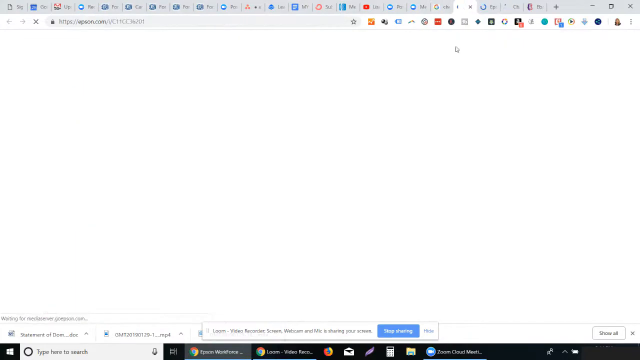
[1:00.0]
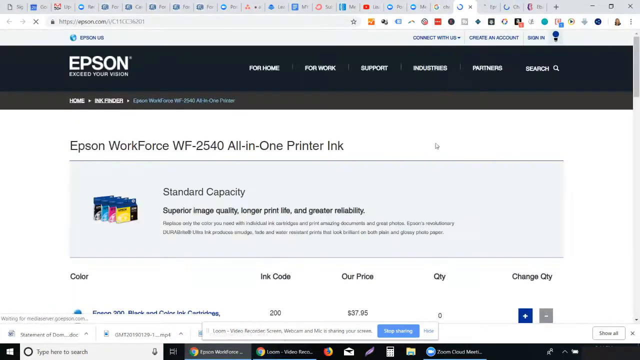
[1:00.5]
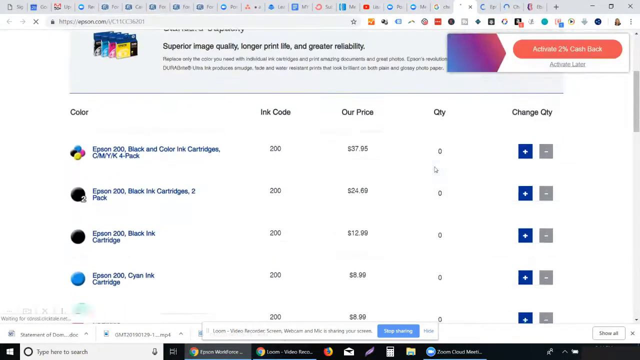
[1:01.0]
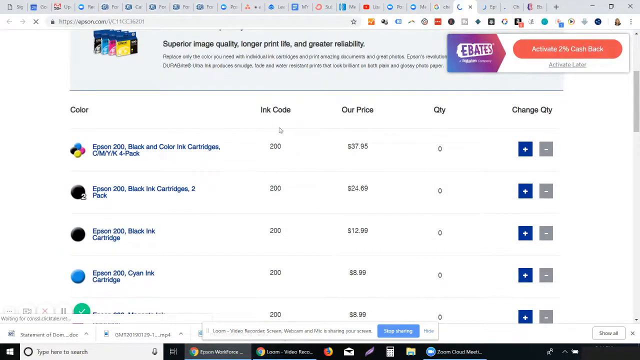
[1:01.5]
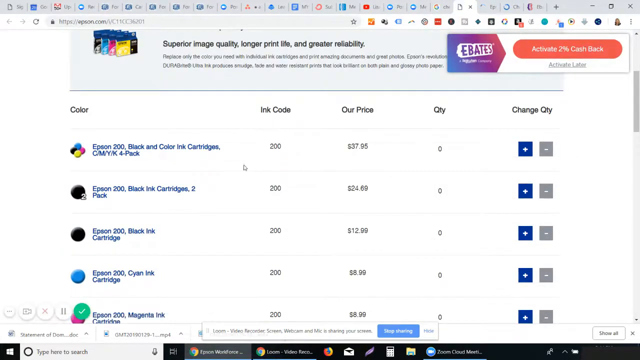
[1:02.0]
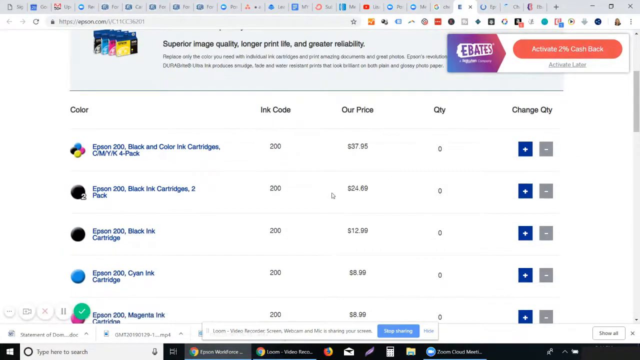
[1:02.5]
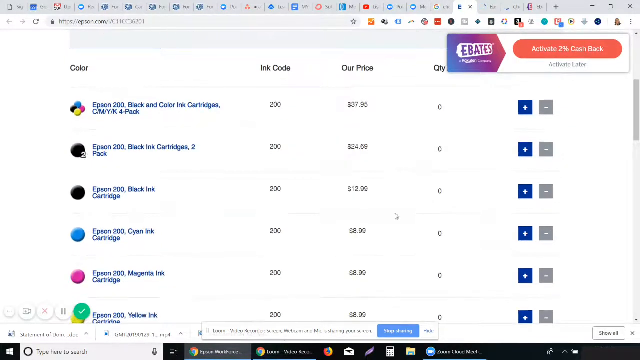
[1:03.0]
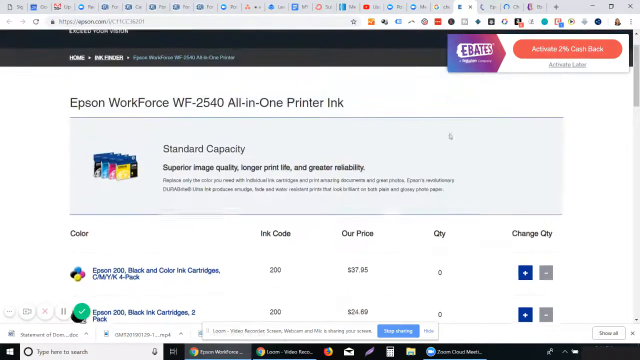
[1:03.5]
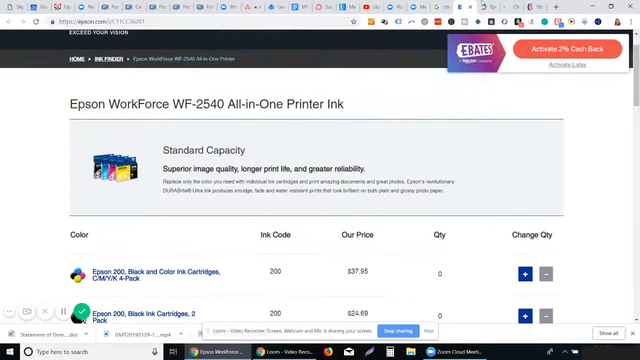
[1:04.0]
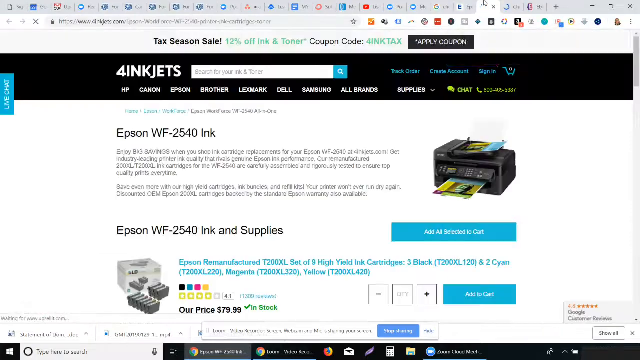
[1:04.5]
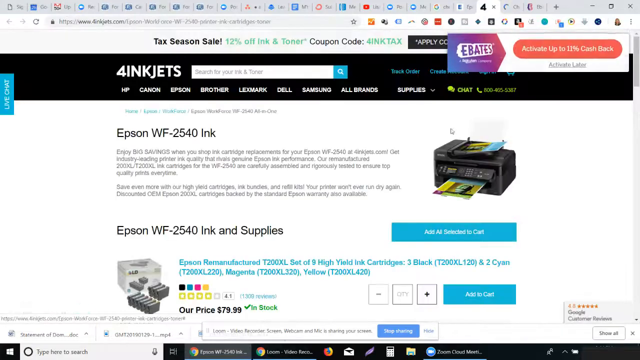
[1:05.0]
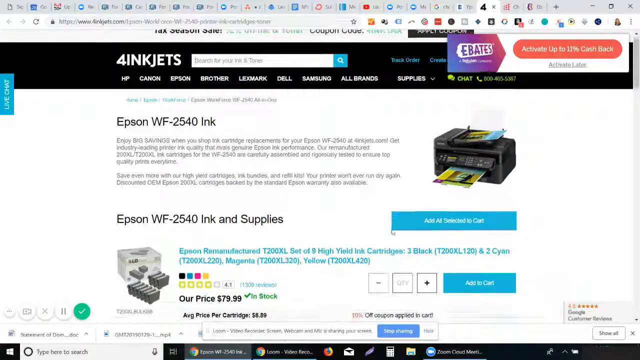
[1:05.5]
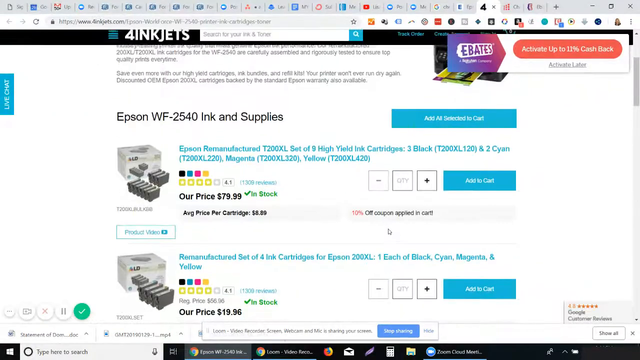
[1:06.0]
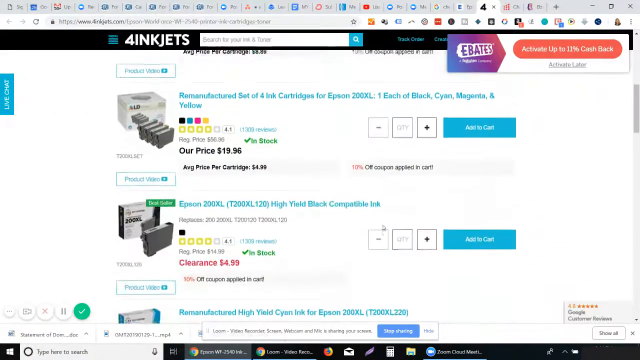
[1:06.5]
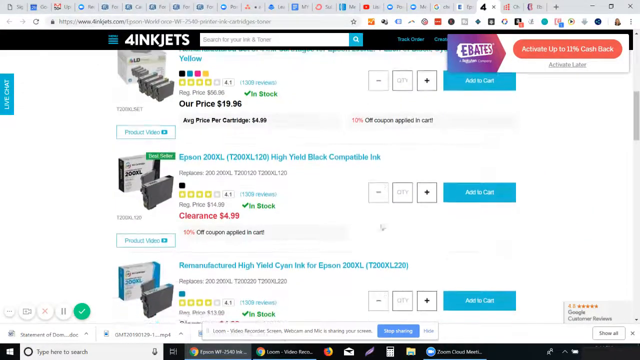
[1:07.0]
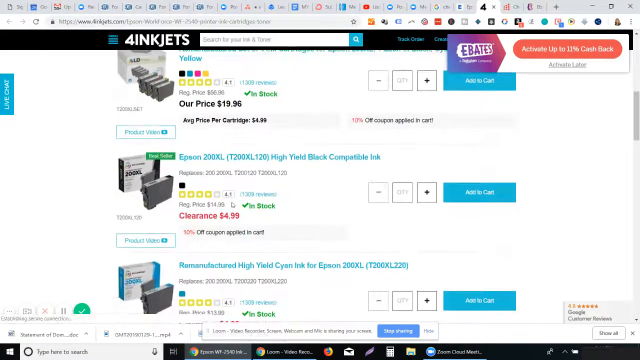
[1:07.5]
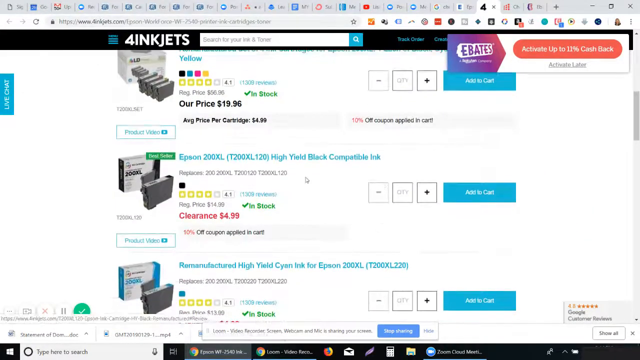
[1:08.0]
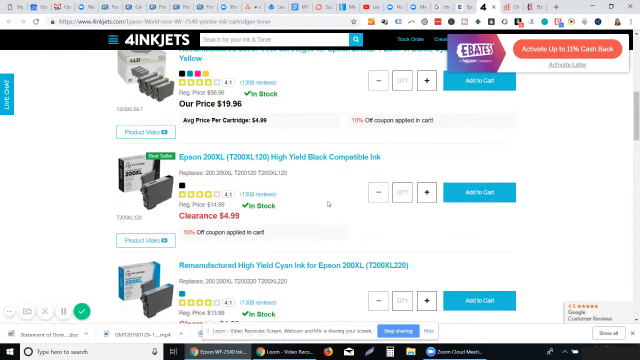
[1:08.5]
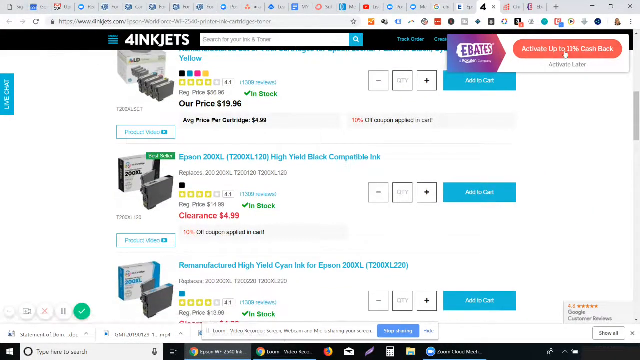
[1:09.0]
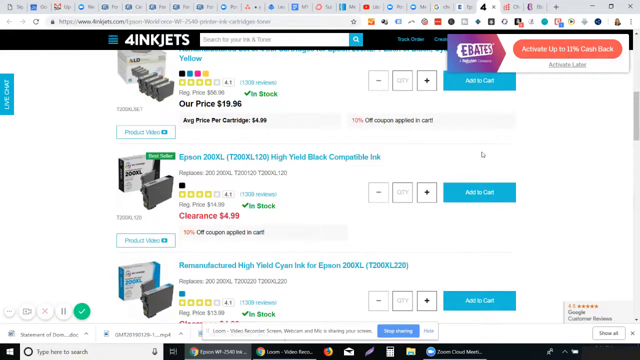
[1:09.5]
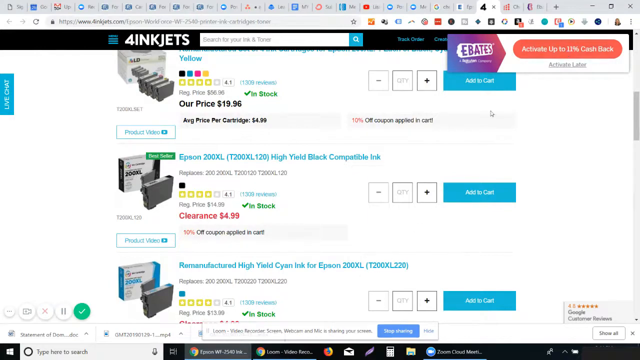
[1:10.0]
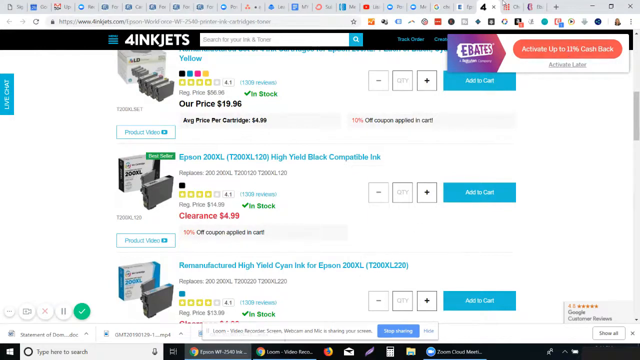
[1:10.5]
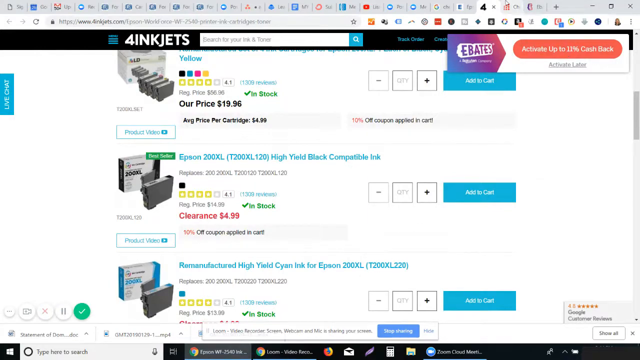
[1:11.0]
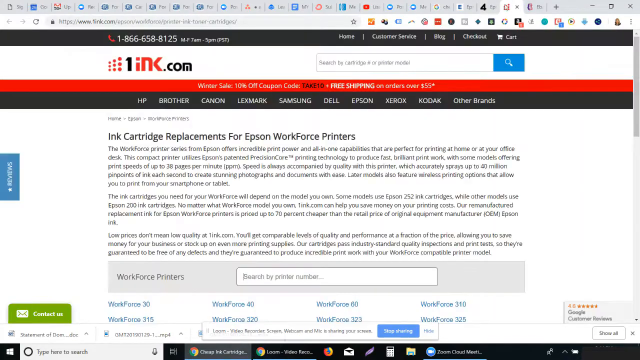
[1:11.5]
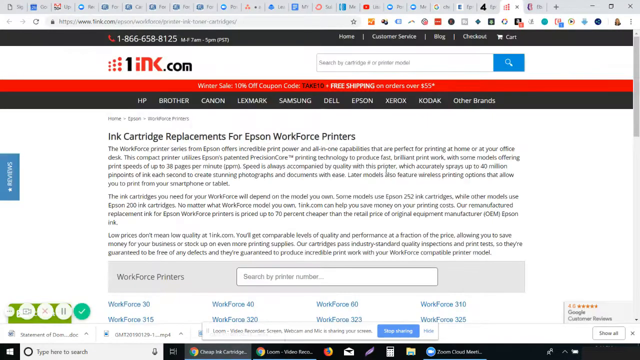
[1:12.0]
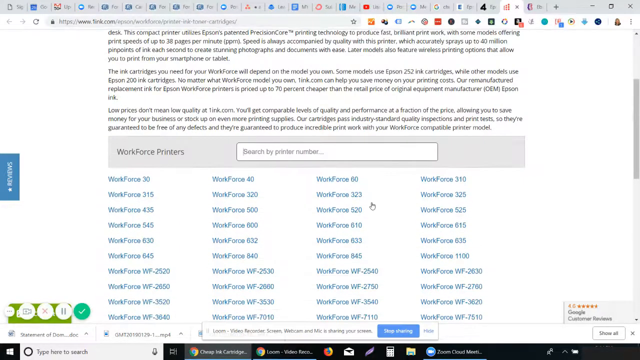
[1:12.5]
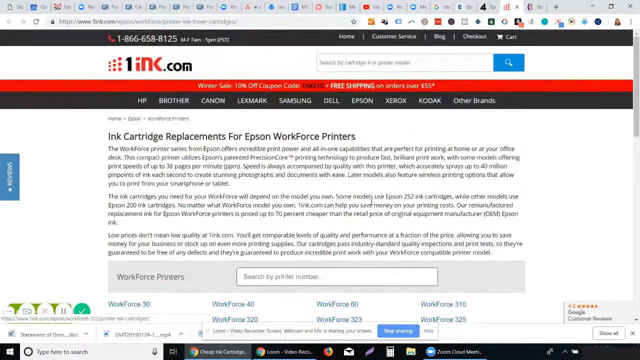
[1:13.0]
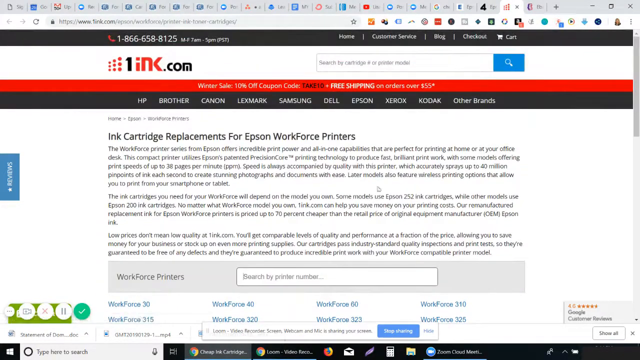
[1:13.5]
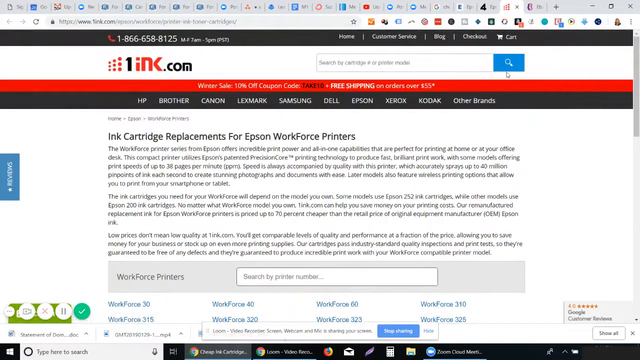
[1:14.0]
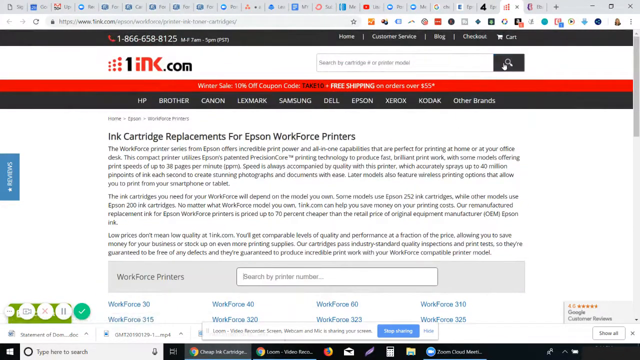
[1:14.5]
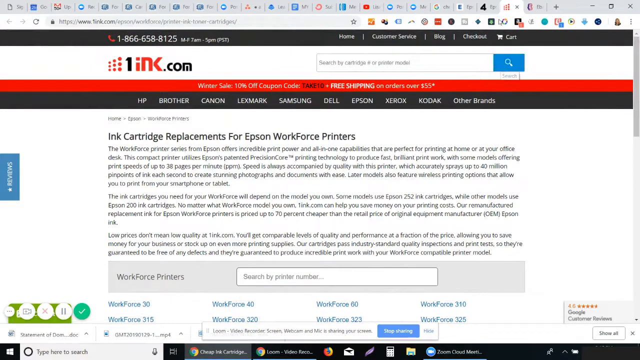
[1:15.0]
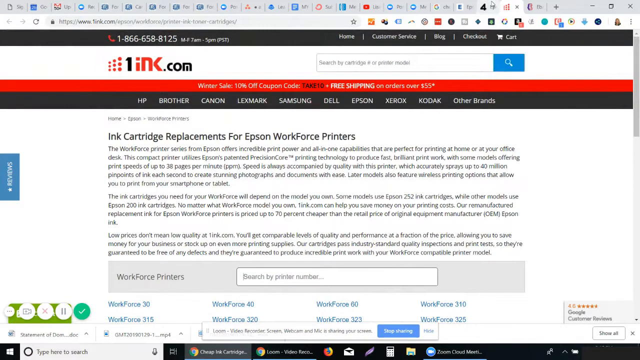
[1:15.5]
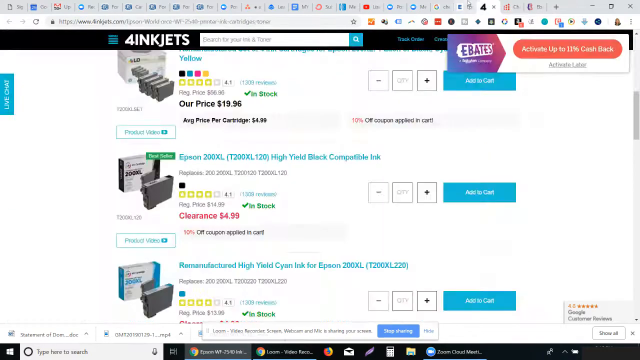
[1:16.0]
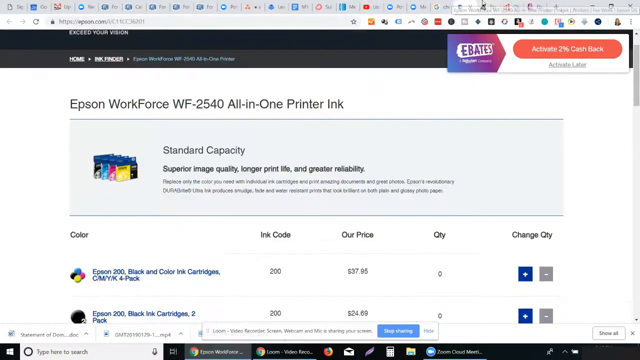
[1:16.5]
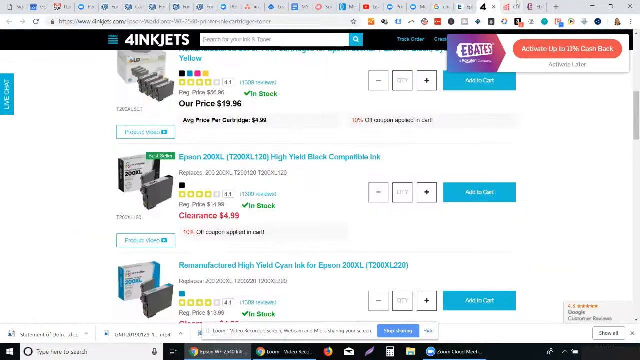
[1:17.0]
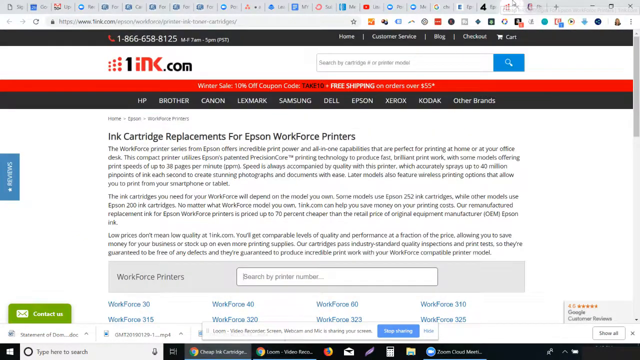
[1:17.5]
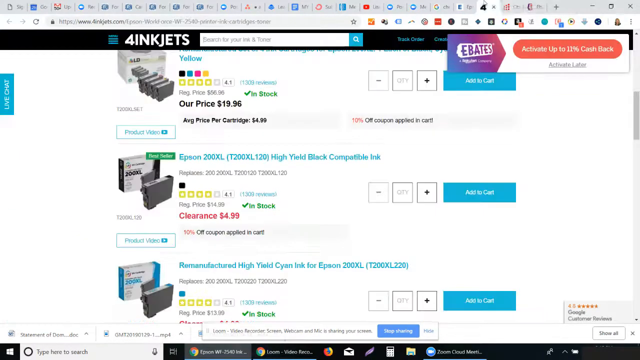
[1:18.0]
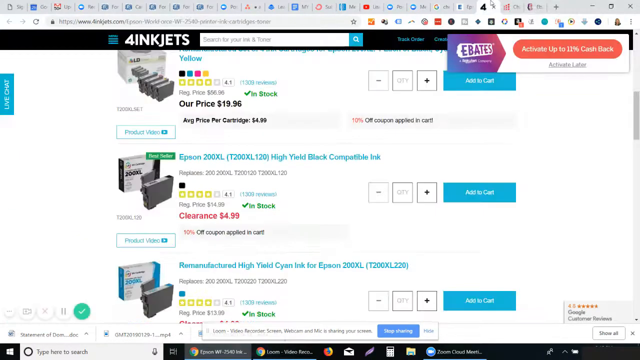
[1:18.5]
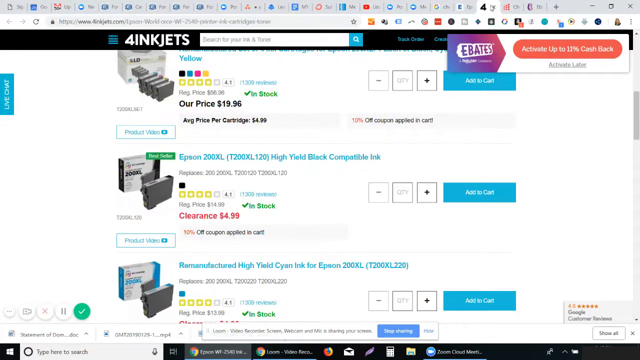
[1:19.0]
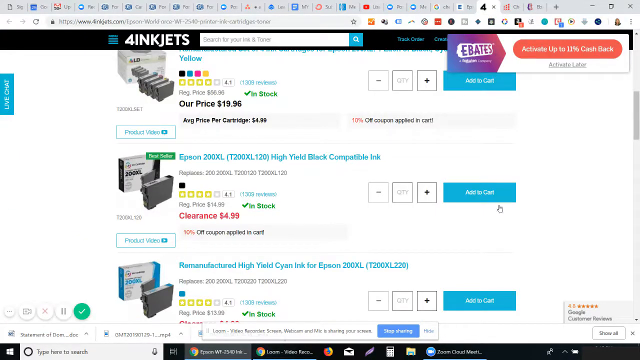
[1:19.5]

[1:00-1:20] The person goes to the main Epson store for printer ink, where the page reads "Epson workforce WF" and "2540" printer ink, along with "standard capacity," "superior image quality" and "longer print." Then the person goes to the four inkjets website and then to the one ink website, apparently comparing prices for the same ink. The screen flicks back and forth between one ink, four inkjets and the main Epson website.